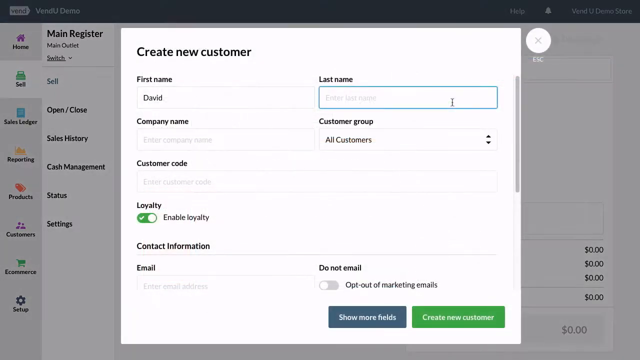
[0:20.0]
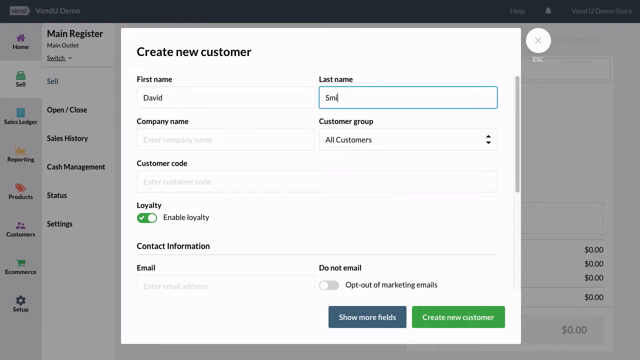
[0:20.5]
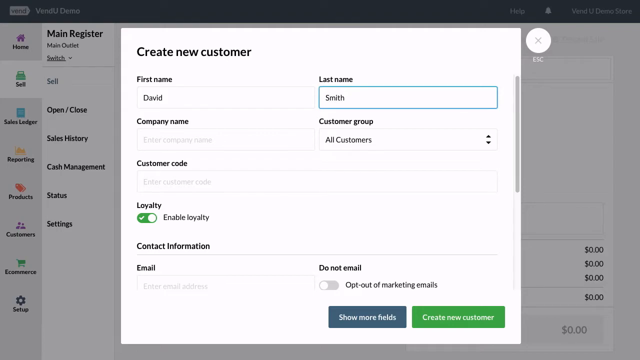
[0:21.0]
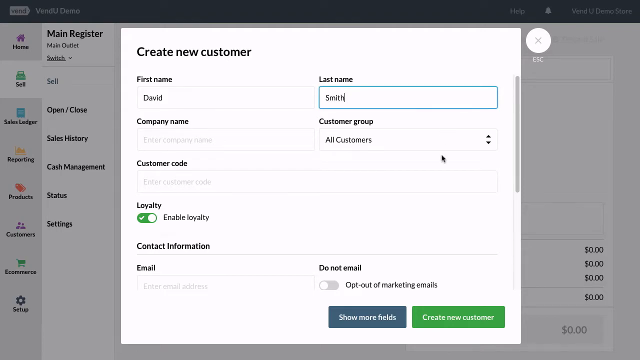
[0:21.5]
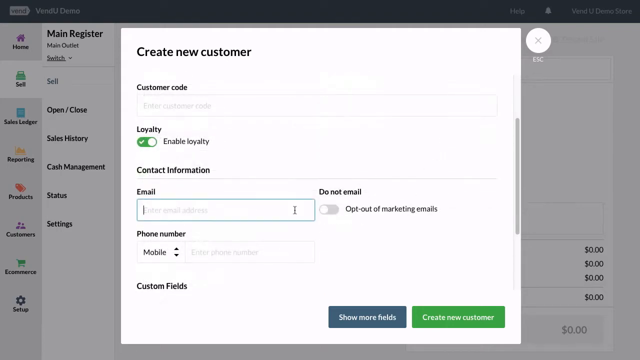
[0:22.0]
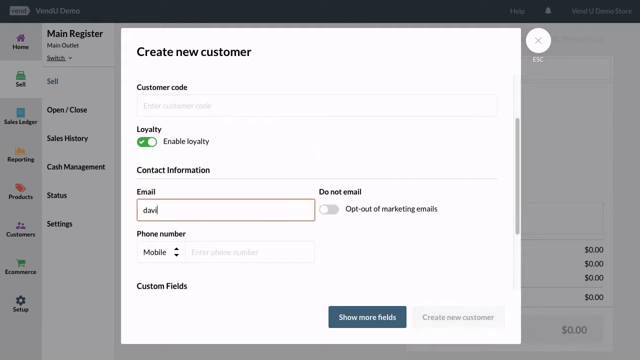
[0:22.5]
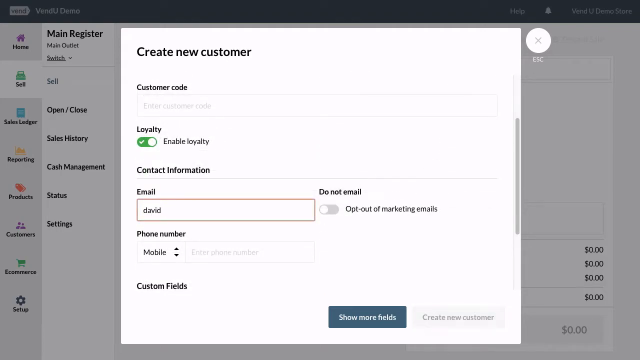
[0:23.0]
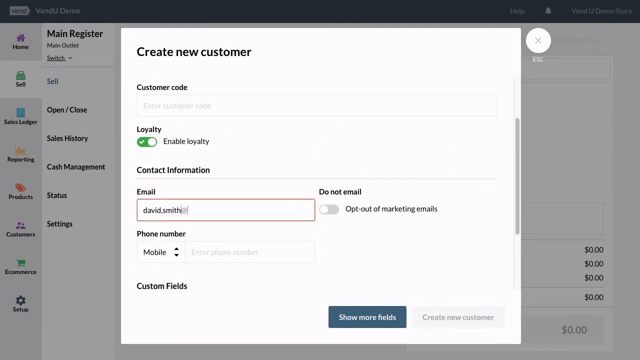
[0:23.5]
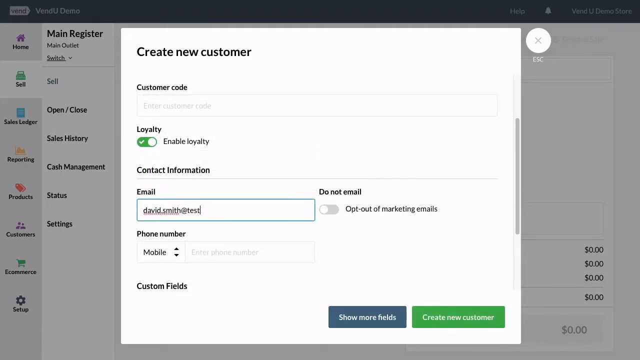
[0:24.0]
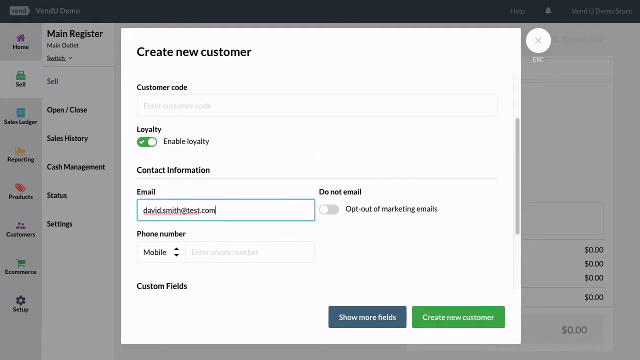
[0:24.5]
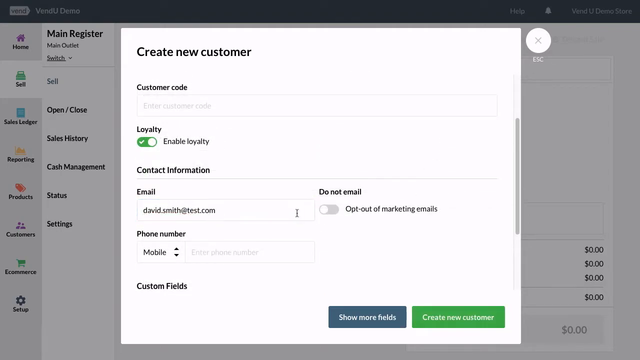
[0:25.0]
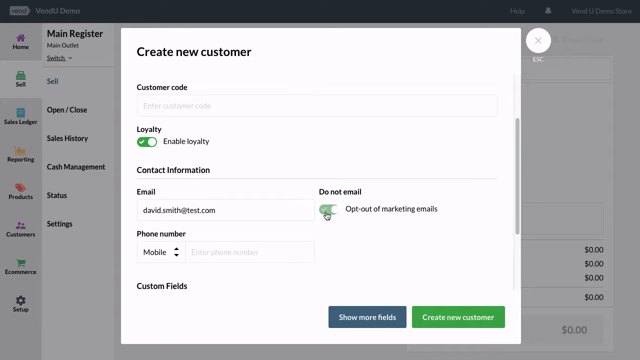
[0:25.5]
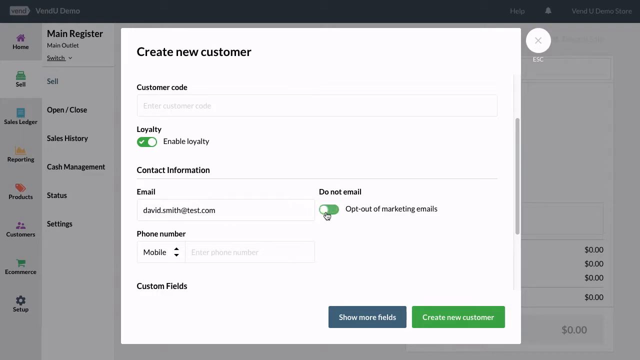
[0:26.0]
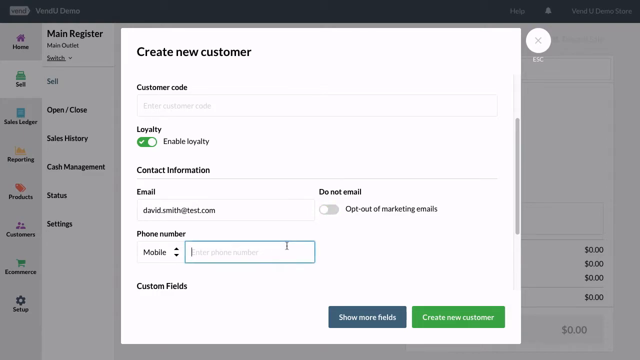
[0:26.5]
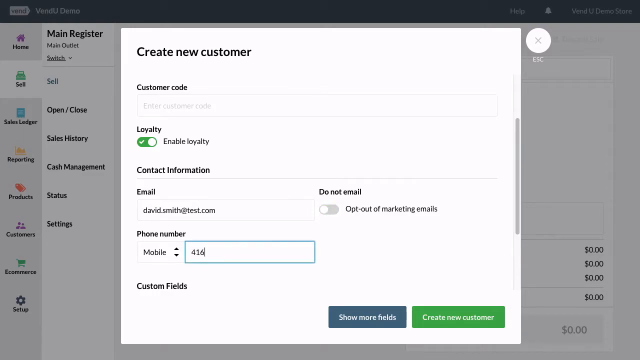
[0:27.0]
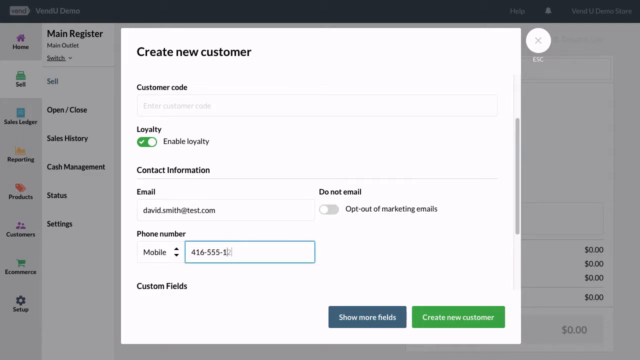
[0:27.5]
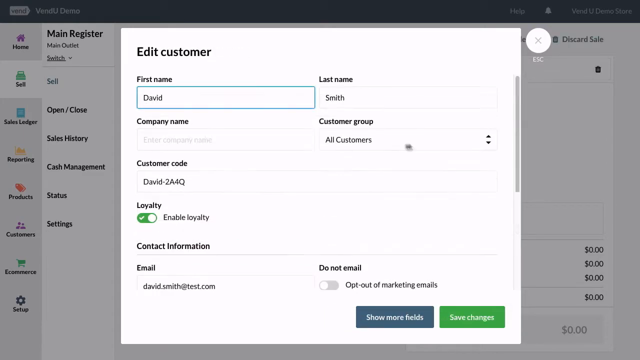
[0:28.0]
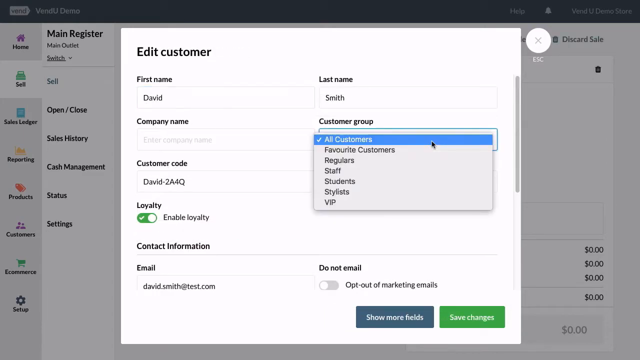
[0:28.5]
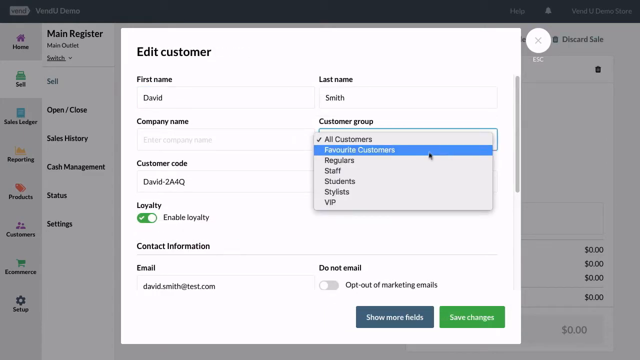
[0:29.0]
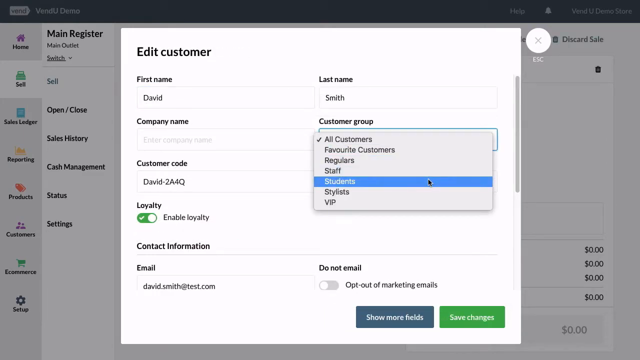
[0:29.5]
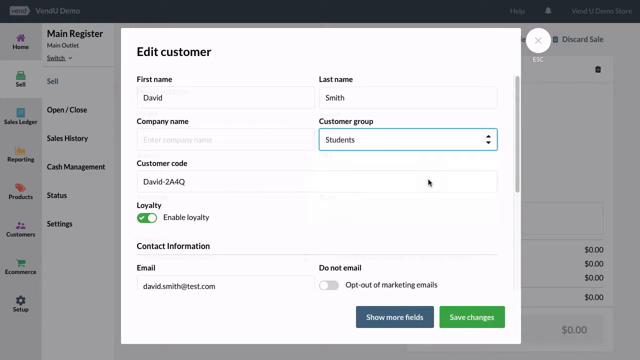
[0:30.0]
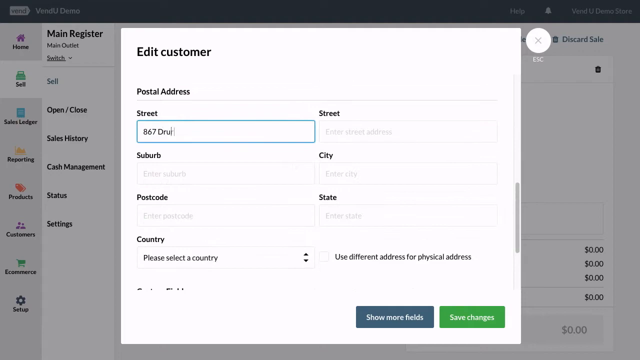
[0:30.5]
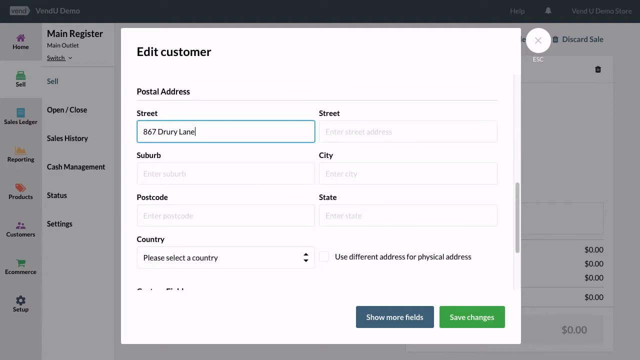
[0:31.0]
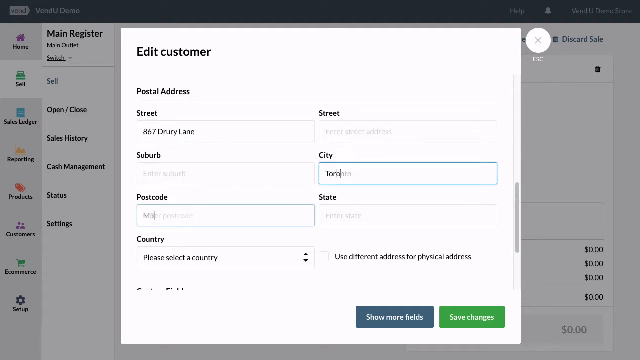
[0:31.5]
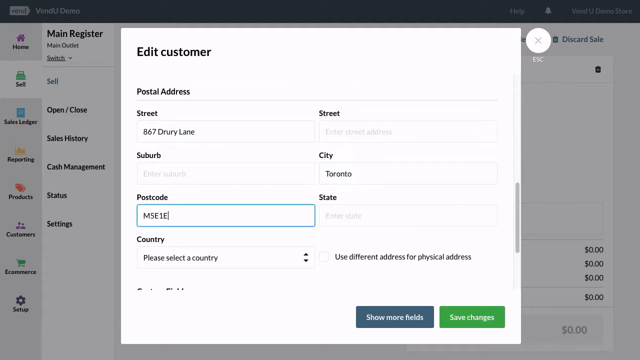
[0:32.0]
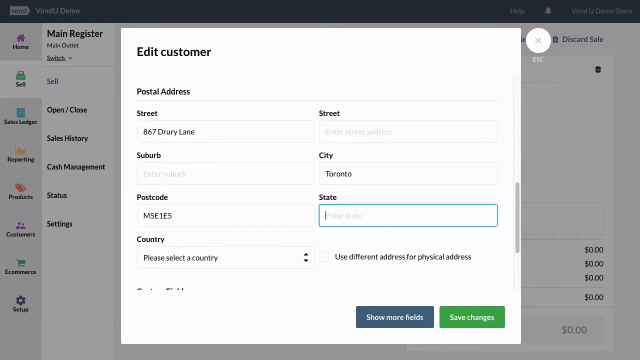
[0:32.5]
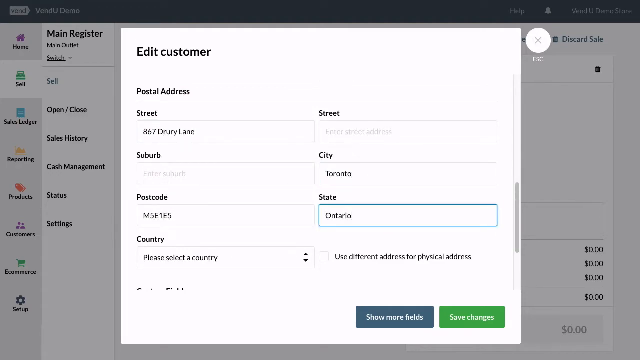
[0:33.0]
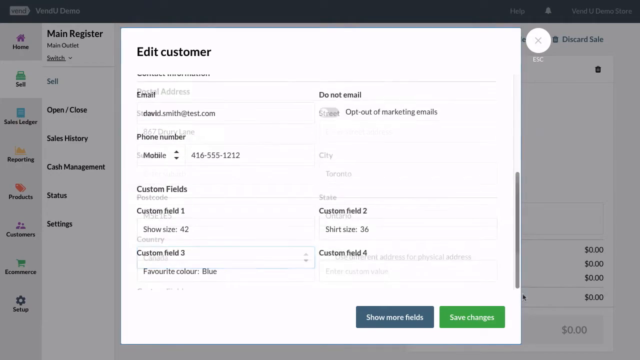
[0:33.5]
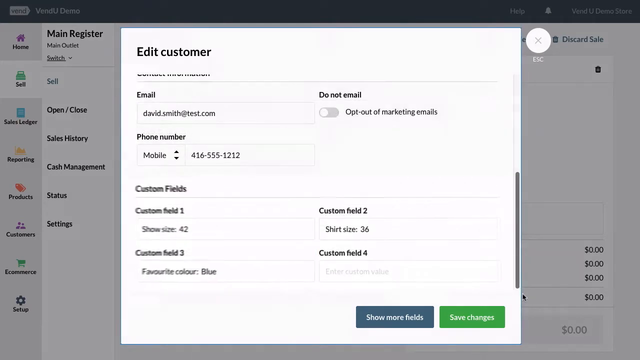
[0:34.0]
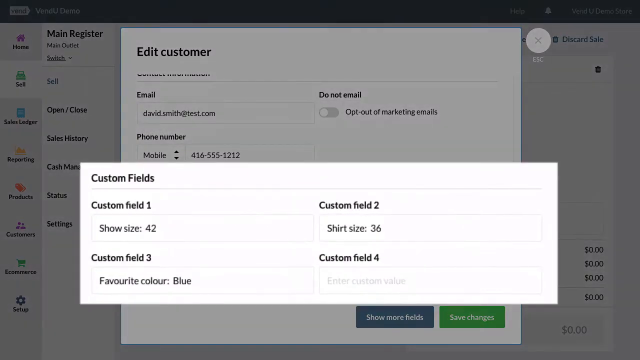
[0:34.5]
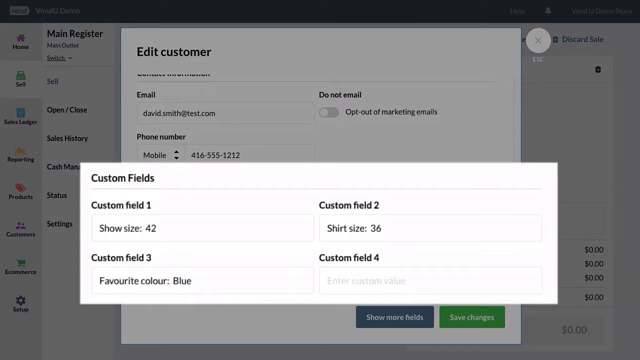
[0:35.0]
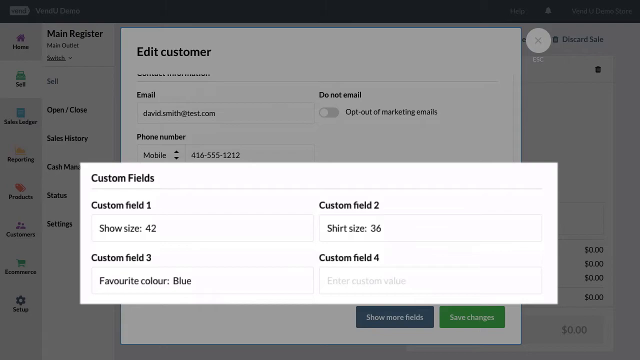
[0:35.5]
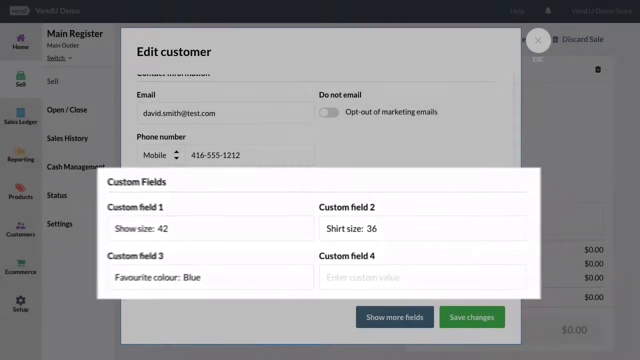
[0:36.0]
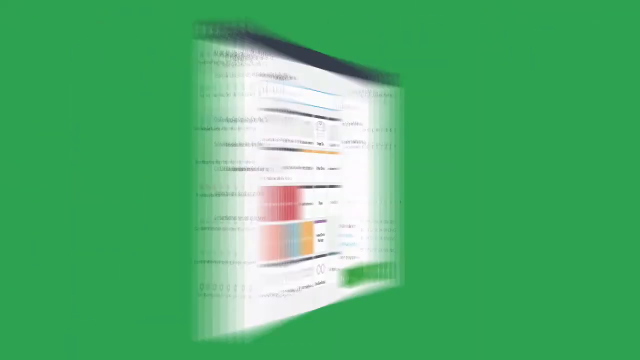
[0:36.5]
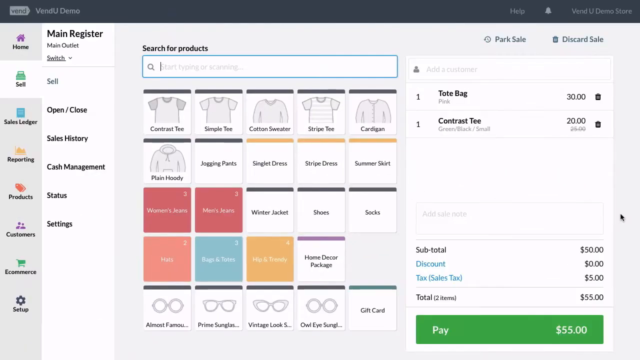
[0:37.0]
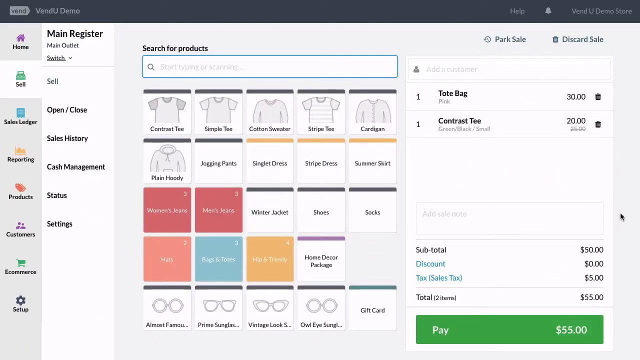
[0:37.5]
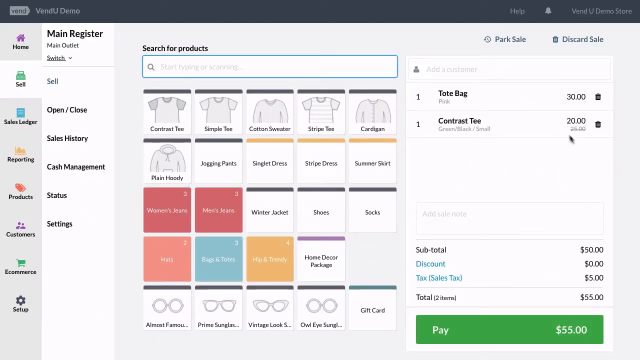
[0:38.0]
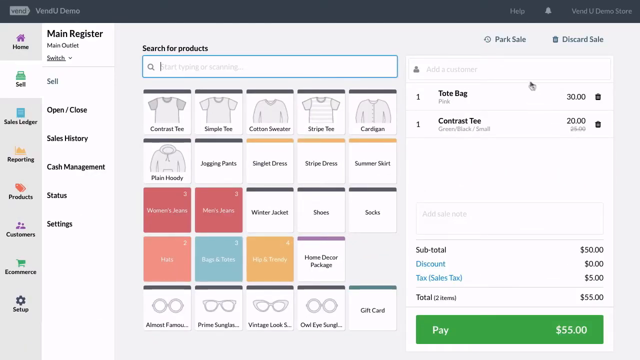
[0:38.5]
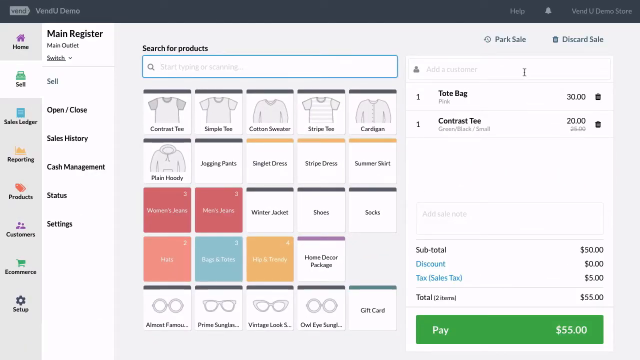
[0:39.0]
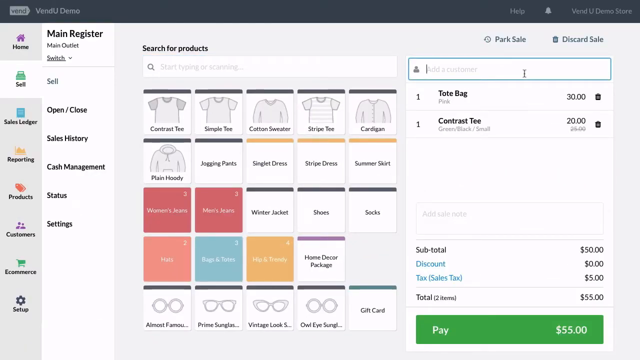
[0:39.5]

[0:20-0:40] A new customer page is open, and an email address has just been added, followed by a phone number. The customer's street address, where they come from and a customer field are filled in, and their name is written so they can be kept in the customer database. On this page the customer's name, address and city are written, and there are also custom fields. The main register appears on the left. Underneath the new customer page are the main register, open and close, sales history, cash management, a switch that is open, and settings. The application shows how to create a new customer page, and the customer's address, where they come from and their state are written in.